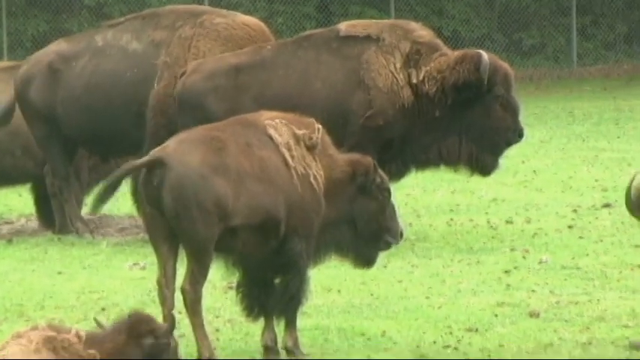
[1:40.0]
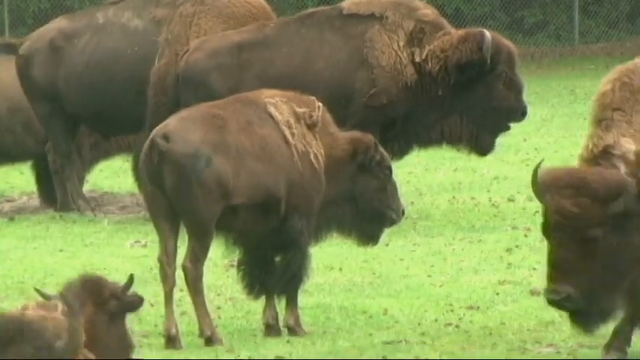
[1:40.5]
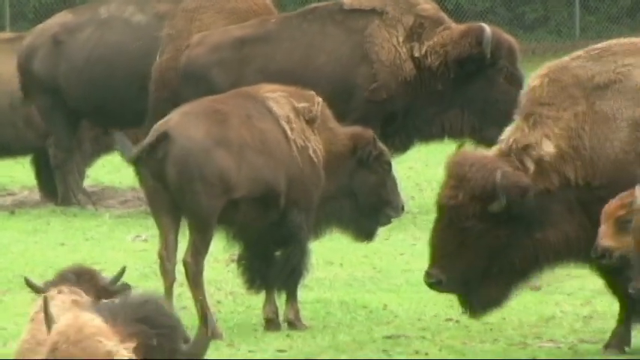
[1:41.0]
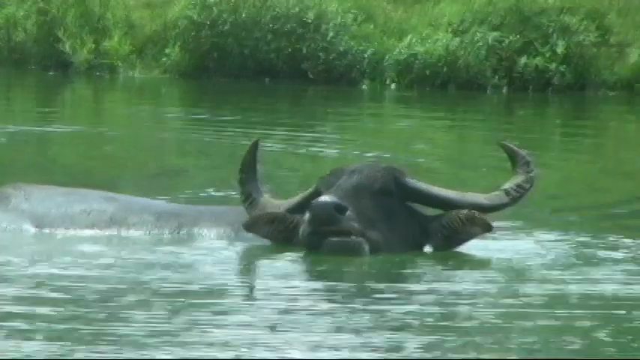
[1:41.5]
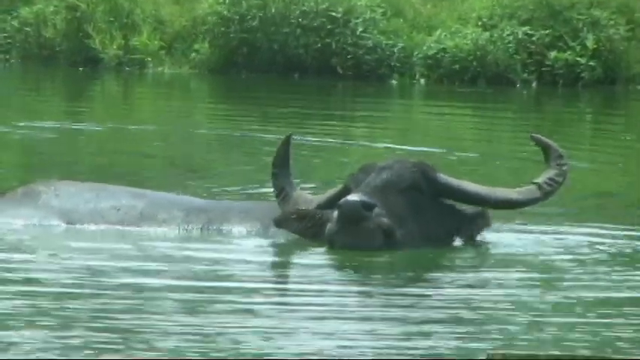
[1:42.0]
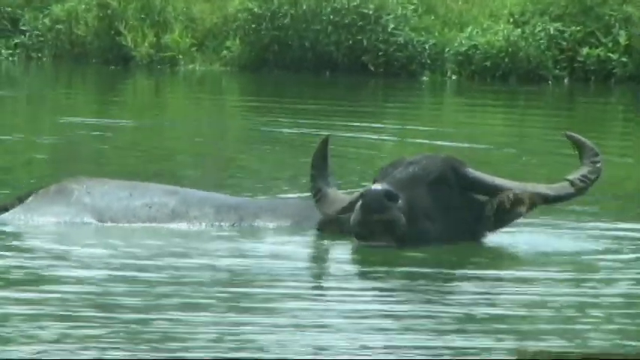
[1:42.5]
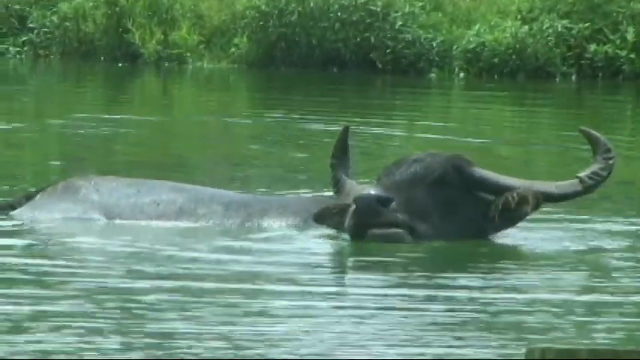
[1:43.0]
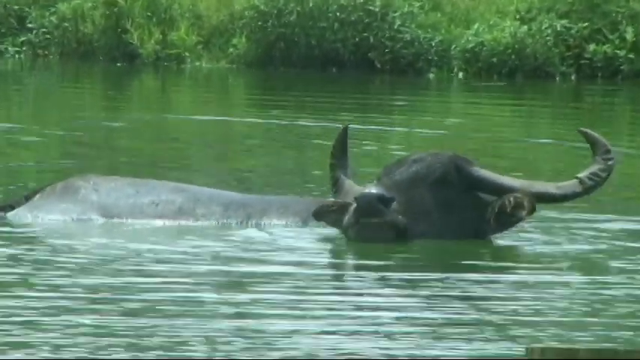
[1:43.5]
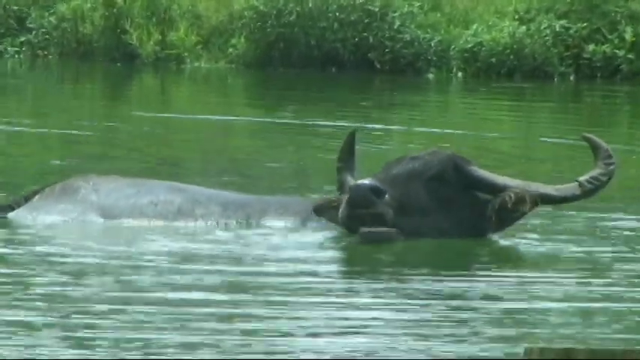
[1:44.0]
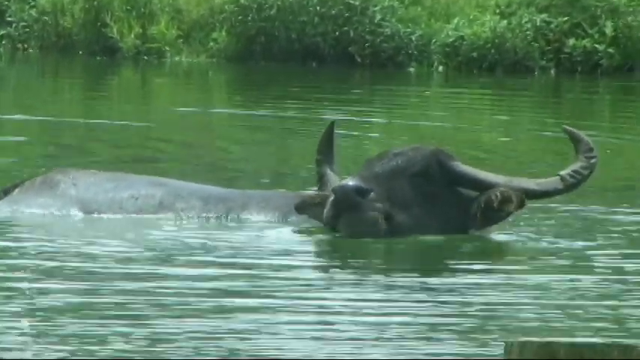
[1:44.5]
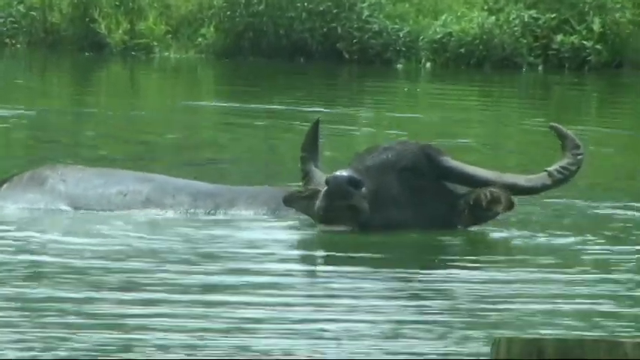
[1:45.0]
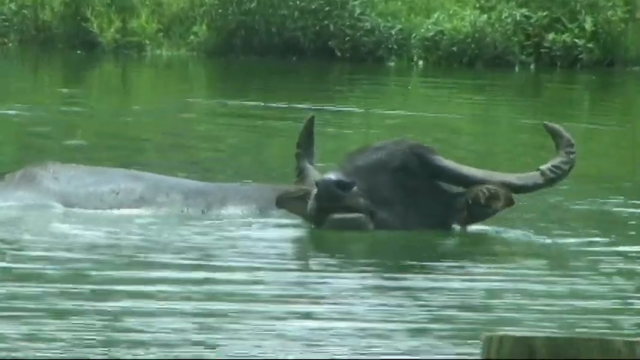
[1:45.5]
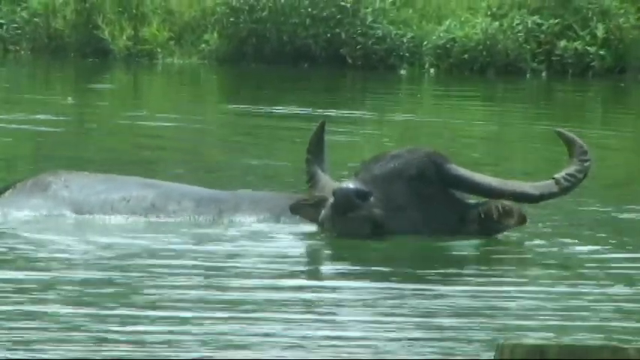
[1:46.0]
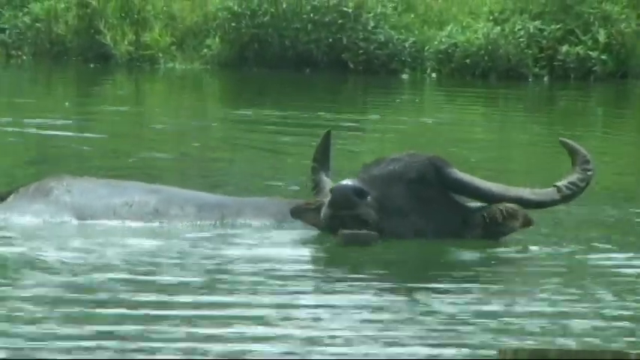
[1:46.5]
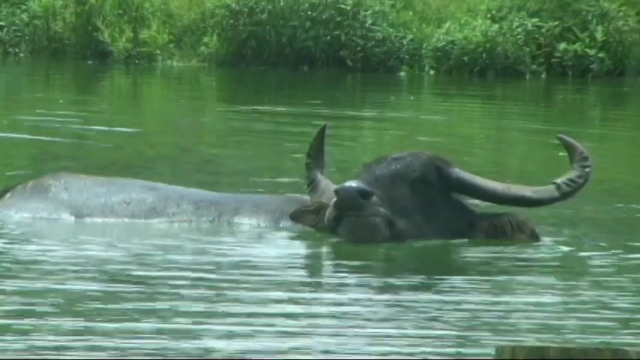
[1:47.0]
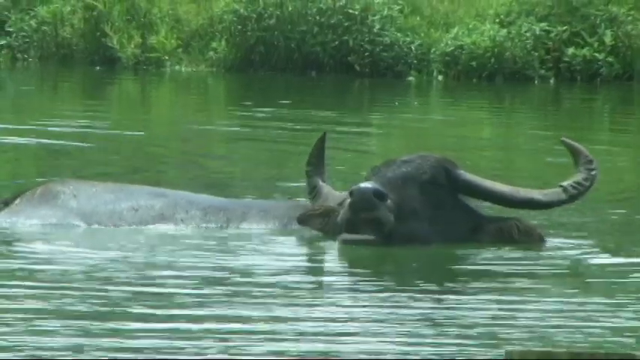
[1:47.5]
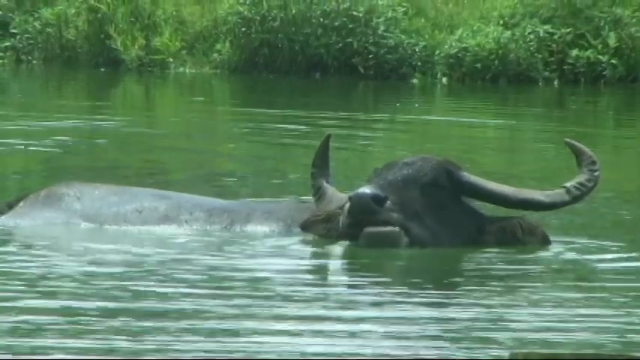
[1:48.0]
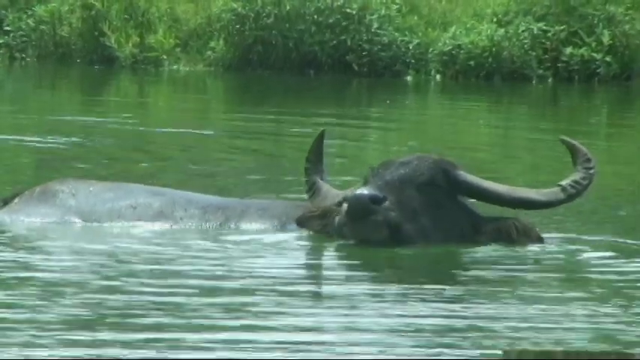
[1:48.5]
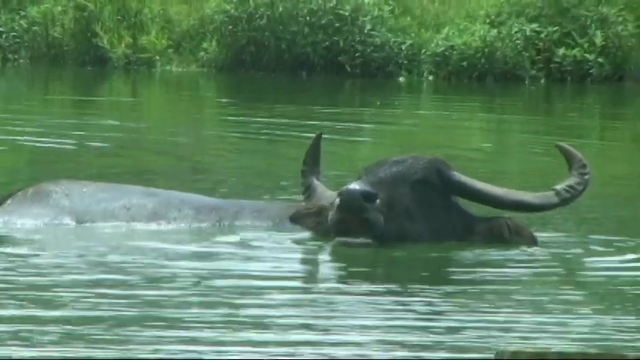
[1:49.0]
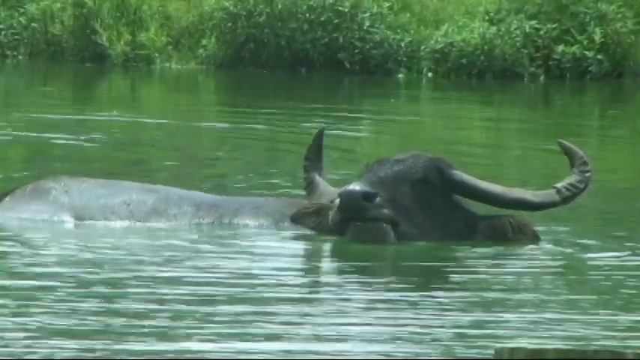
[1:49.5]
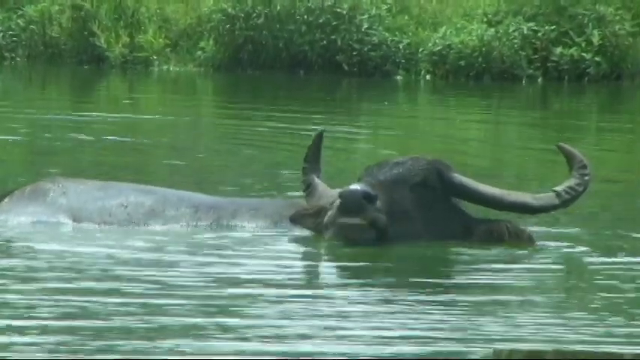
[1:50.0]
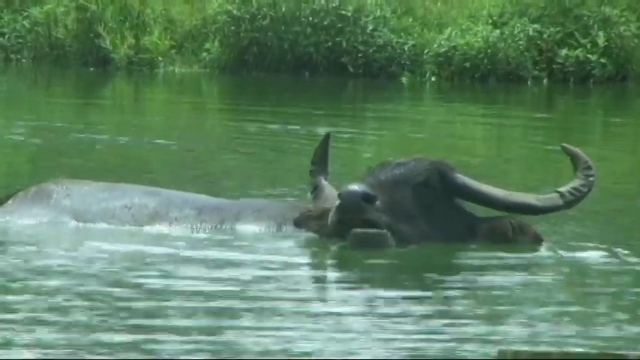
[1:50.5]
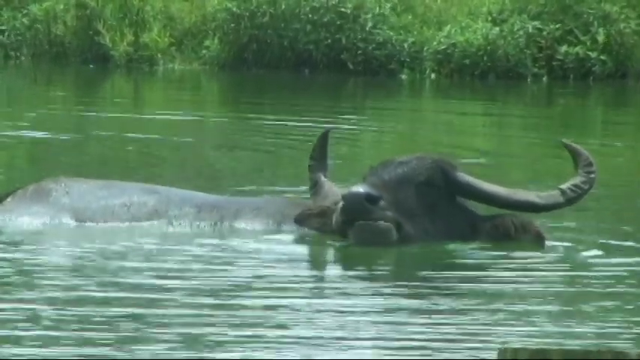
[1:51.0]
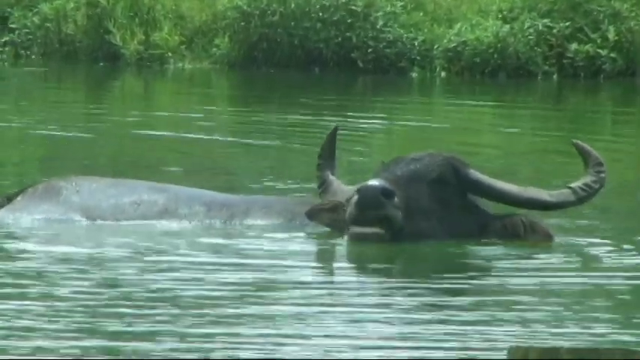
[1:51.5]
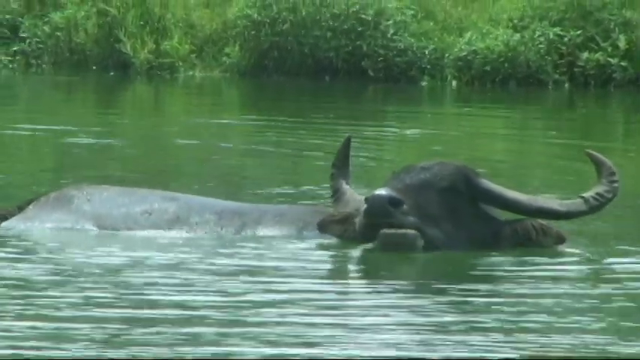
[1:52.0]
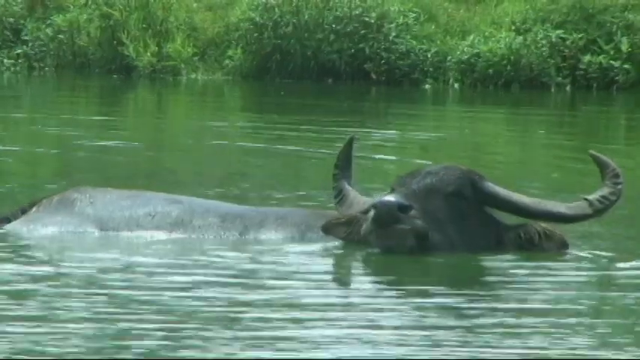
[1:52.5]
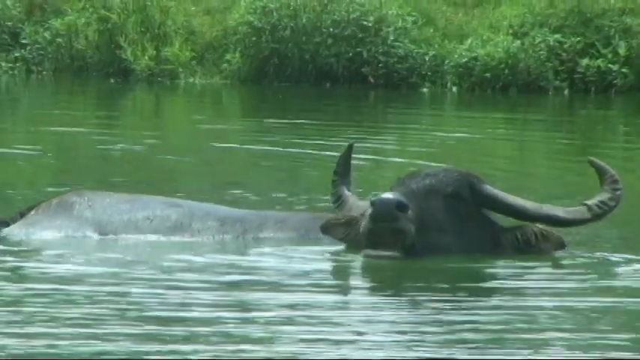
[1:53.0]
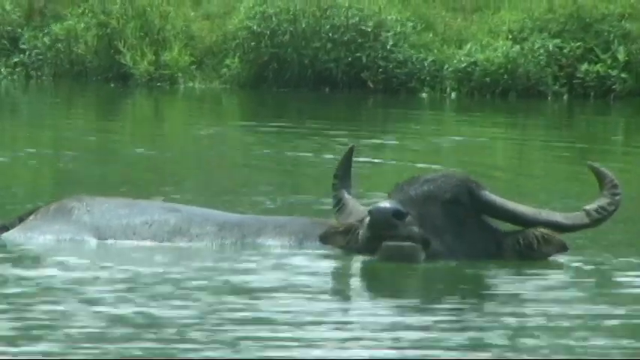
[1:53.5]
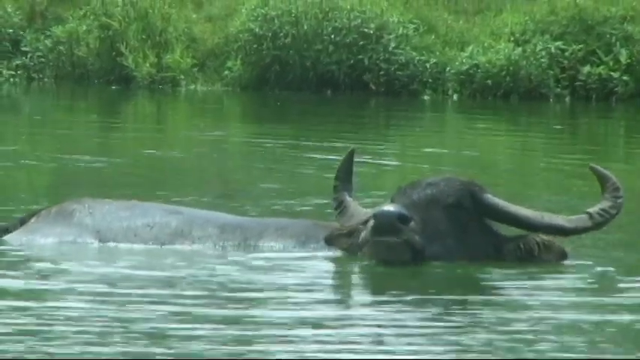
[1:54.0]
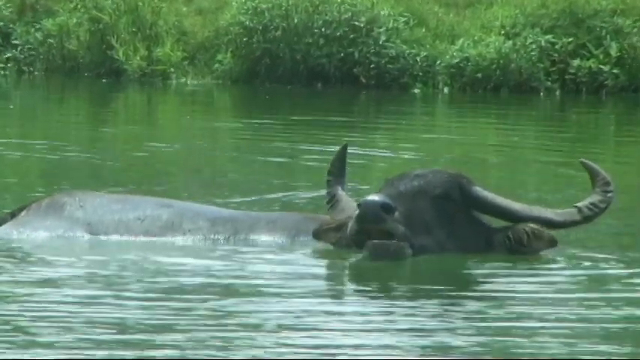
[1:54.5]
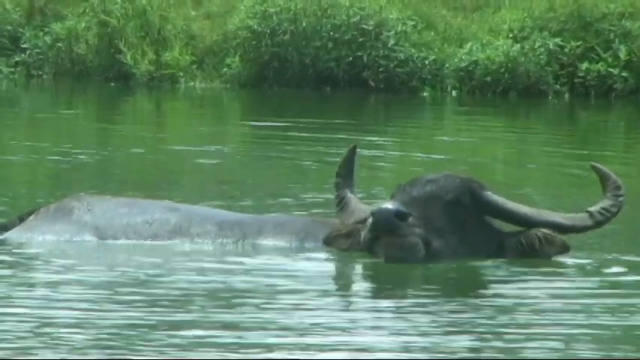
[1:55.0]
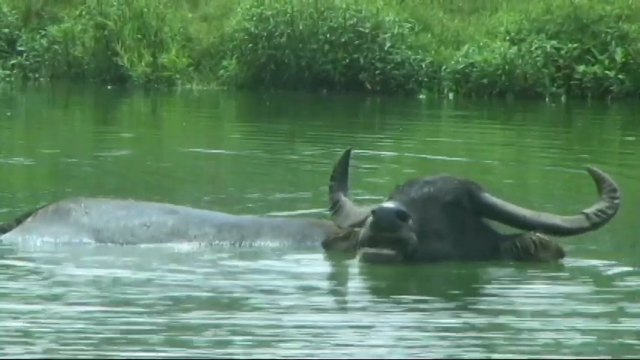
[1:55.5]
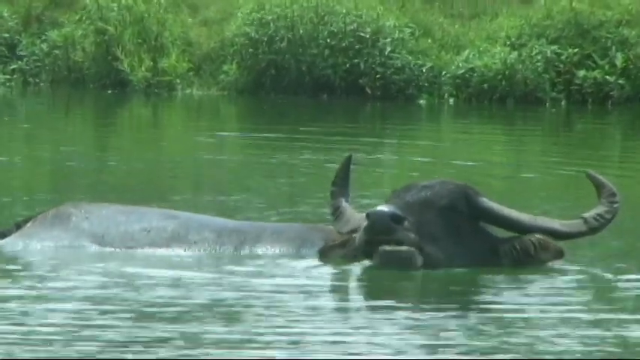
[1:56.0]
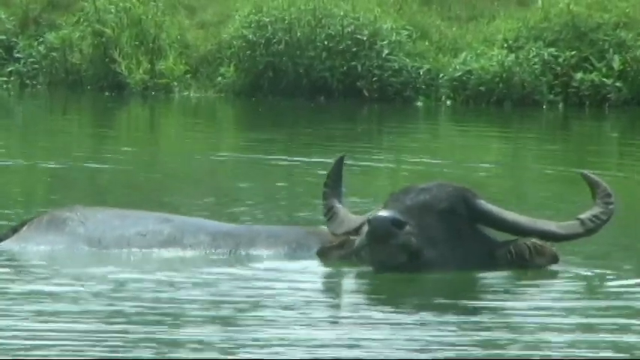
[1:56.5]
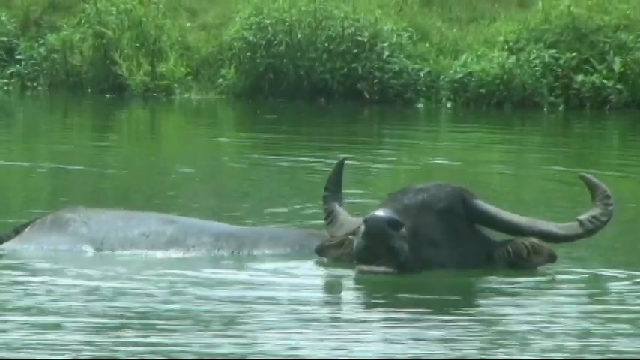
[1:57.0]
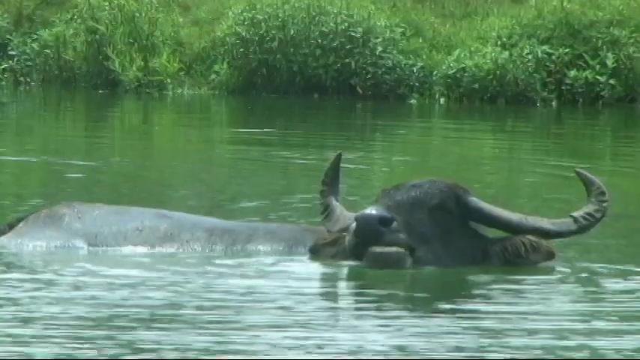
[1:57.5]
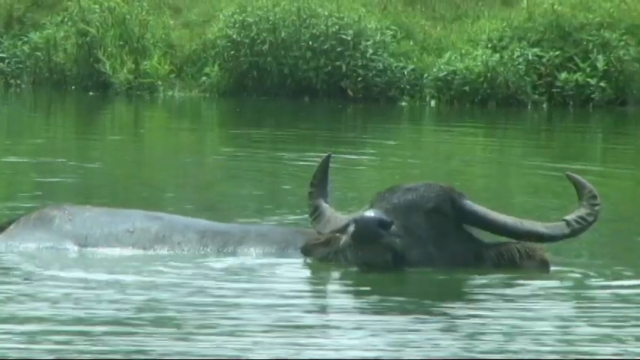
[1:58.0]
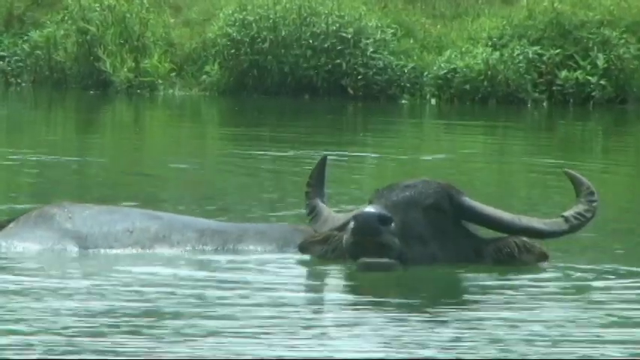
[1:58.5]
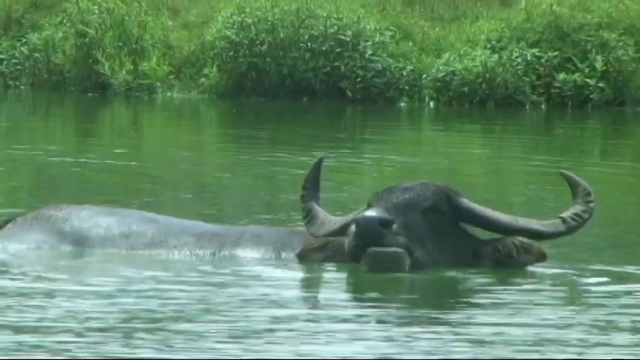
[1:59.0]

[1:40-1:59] The bison continue, and three more bison walk in from the right side towards the left. The video then shows what looks like a water buffalo, mostly submerged in the water with its head sticking out. It looks like it might be drinking water or chewing on something; its horns are visible, and its mouth opens up and down, possibly chewing. Its ears perk up and move down into the water. The camera focuses on the water buffalo with its head sticking up, seemingly chewing the entire time. There is a lot of greenery in the background; the place is possibly a marsh area or a very still river.